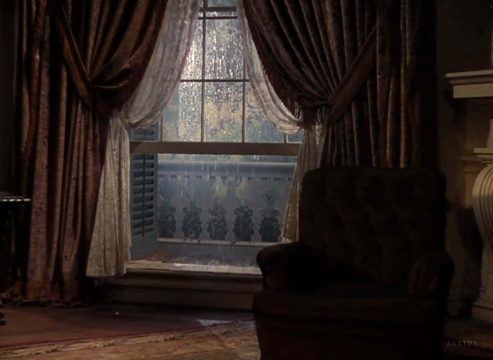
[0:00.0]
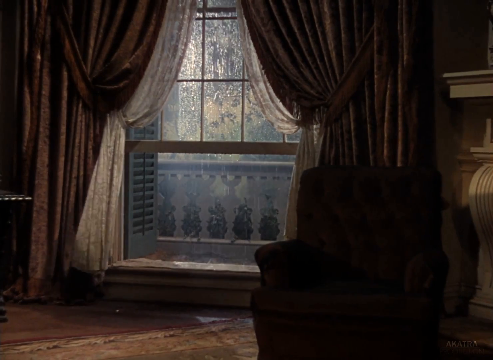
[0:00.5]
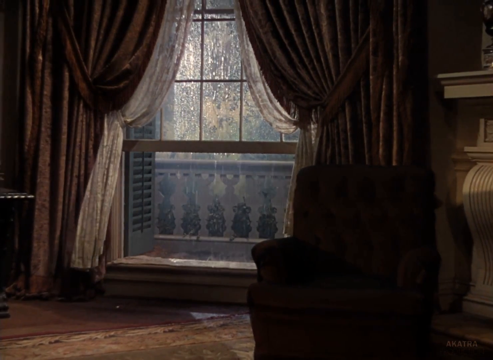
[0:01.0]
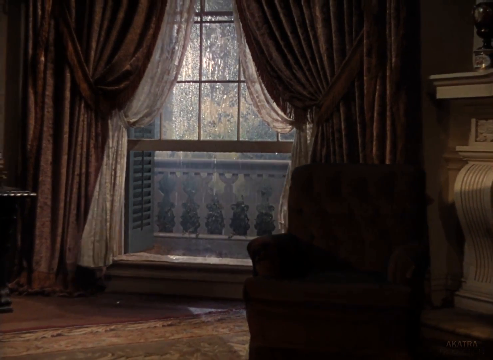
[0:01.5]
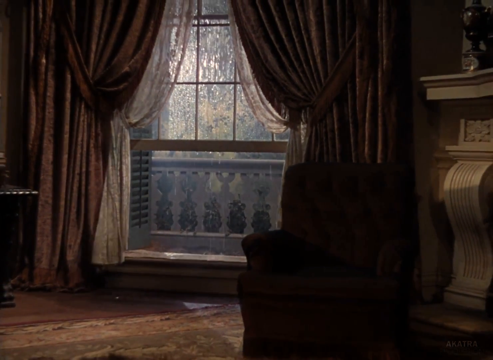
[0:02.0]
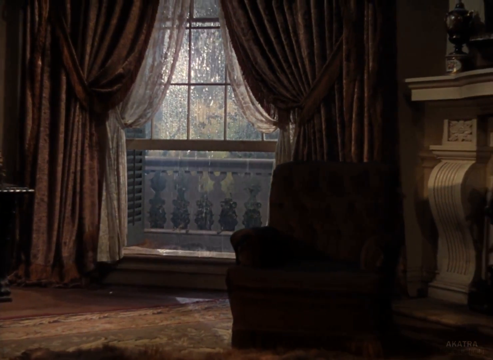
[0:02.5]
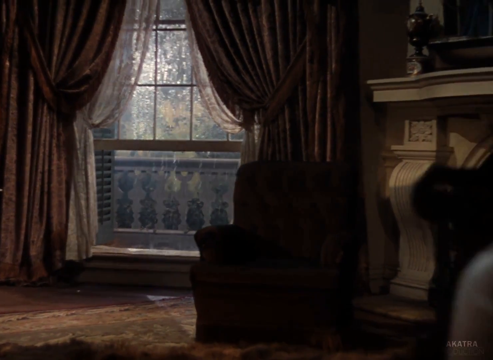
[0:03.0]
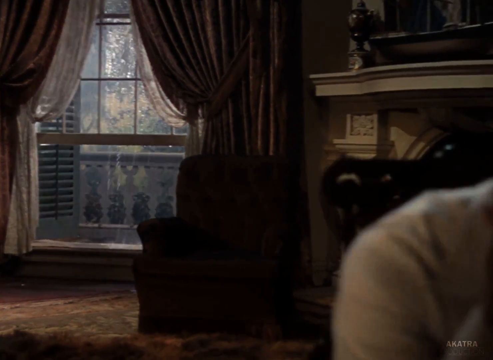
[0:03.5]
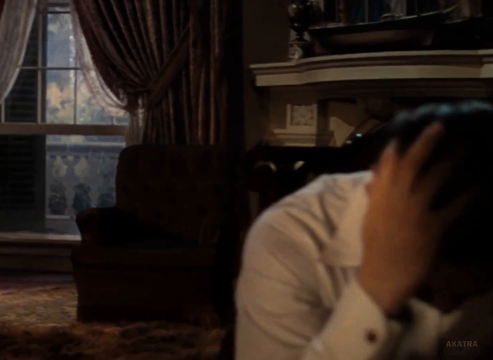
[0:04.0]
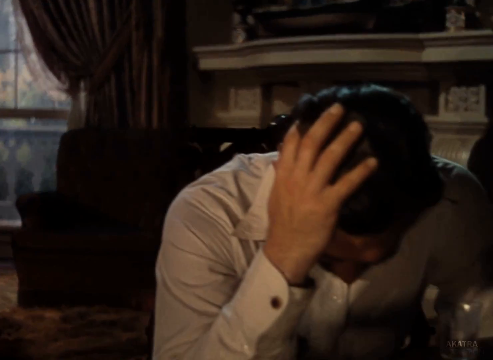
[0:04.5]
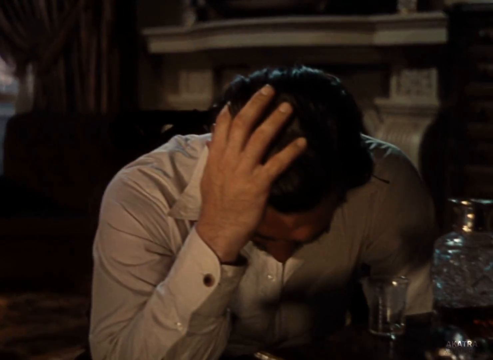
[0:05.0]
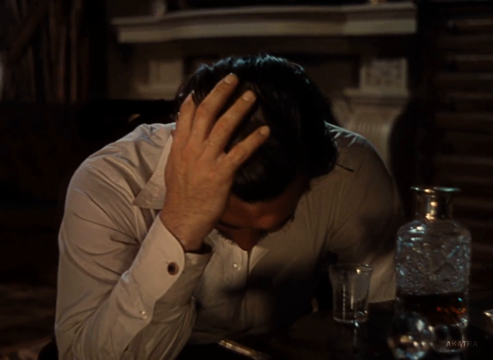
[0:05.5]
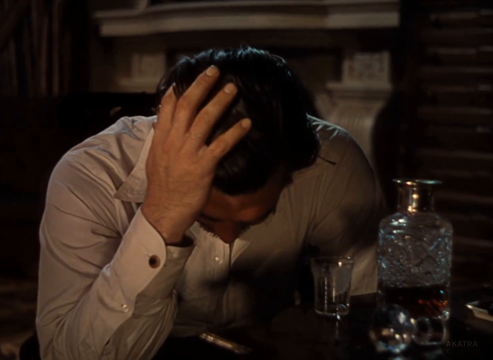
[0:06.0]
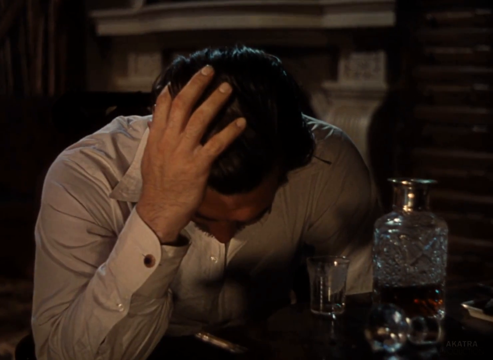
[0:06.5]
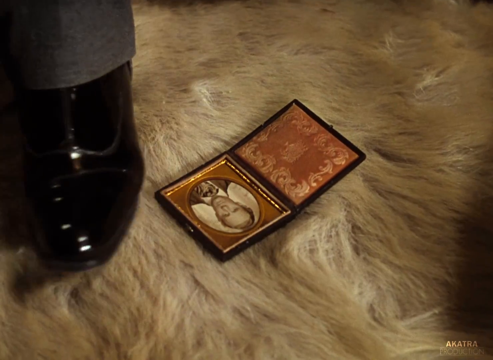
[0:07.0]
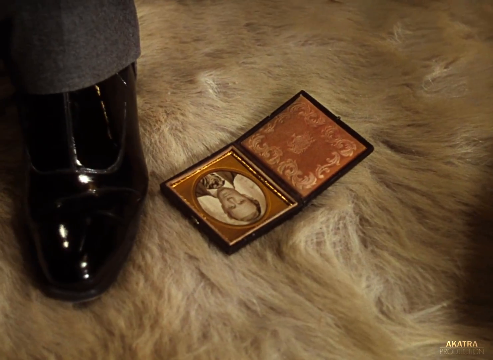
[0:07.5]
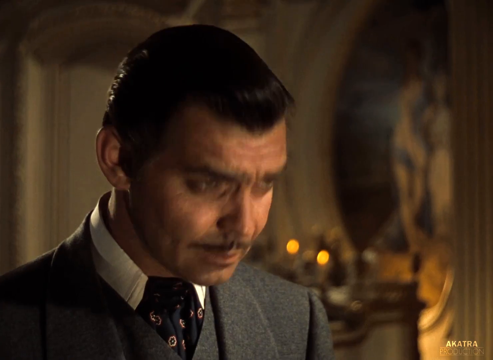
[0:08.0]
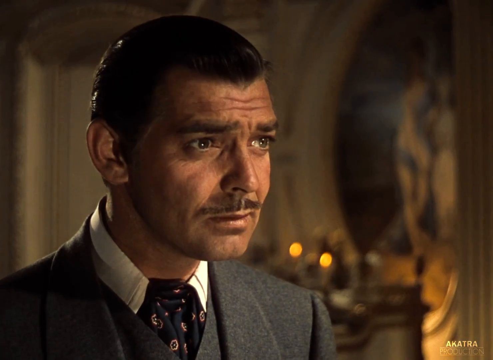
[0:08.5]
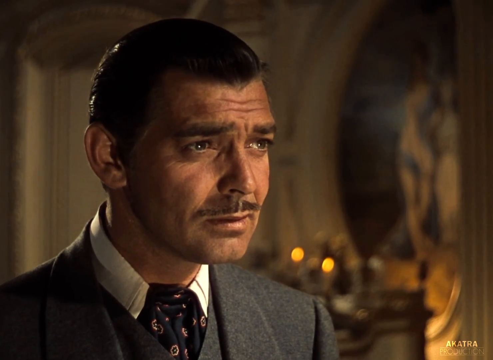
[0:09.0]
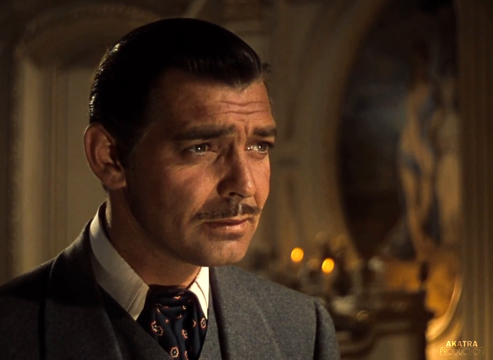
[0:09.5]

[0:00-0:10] A curtain blows in the wind while heavy rain hits the window behind it and drips down the glass. A close-up shows a man with his right hand on his face, as if frustrated or sad. Then he, or somebody, steps on a sort of locket holding a black and white picture of an old man, which suggests an old-fashioned setting.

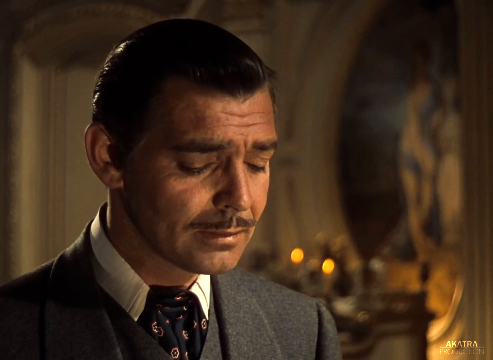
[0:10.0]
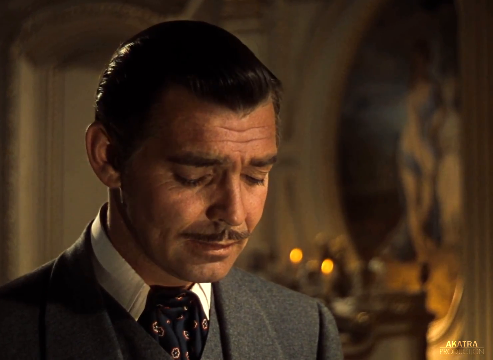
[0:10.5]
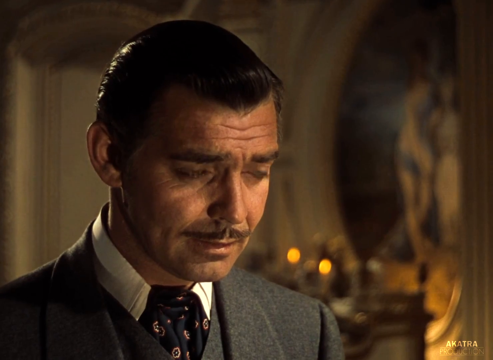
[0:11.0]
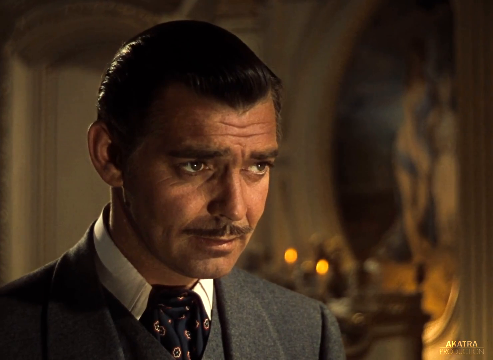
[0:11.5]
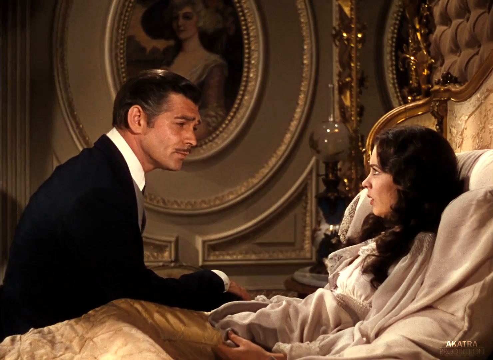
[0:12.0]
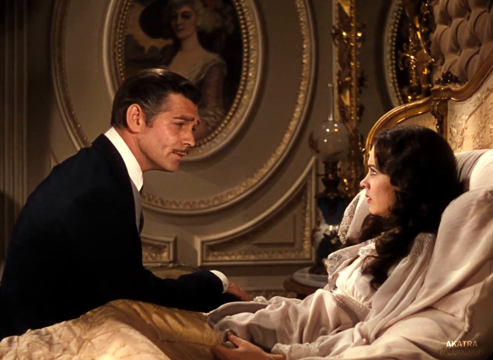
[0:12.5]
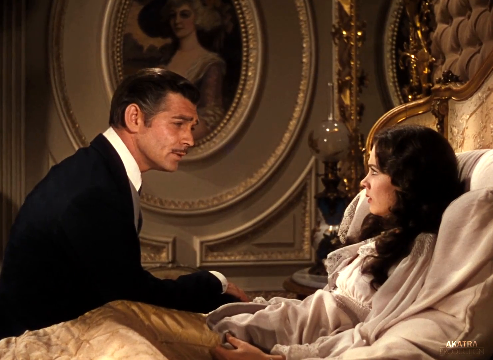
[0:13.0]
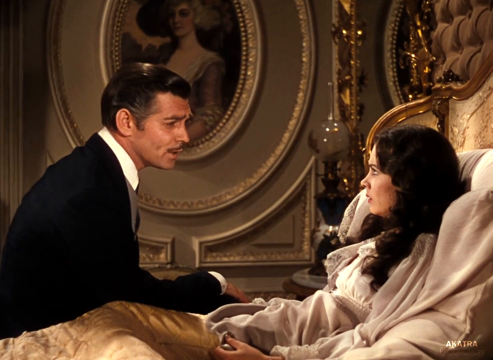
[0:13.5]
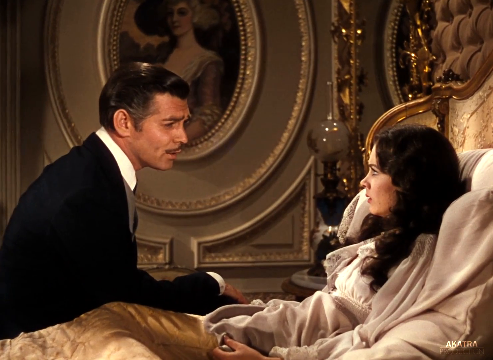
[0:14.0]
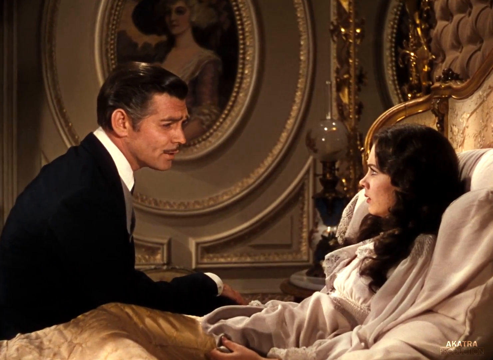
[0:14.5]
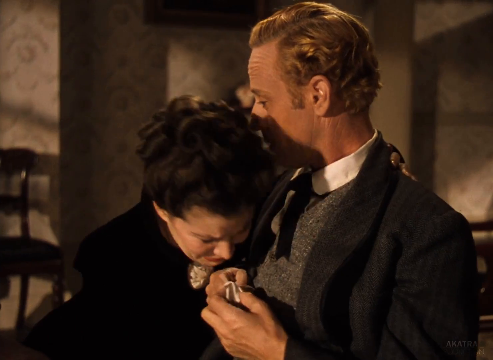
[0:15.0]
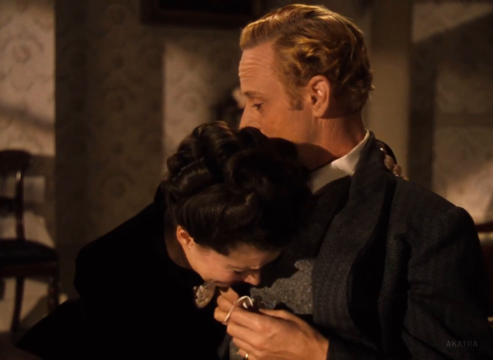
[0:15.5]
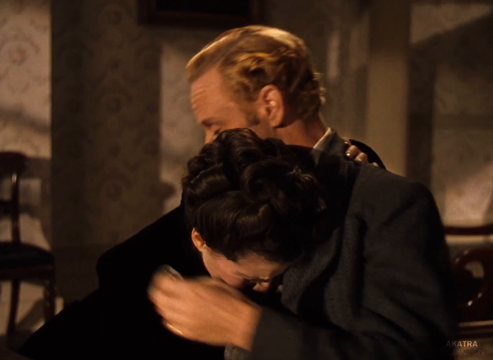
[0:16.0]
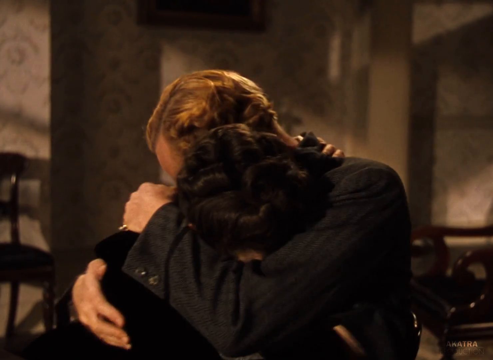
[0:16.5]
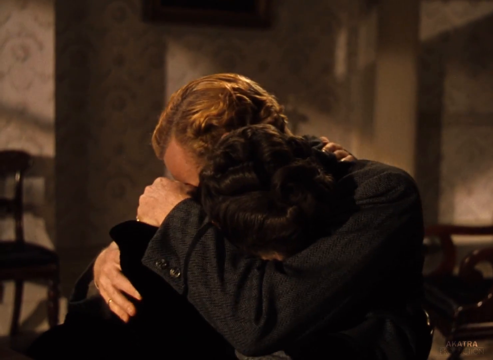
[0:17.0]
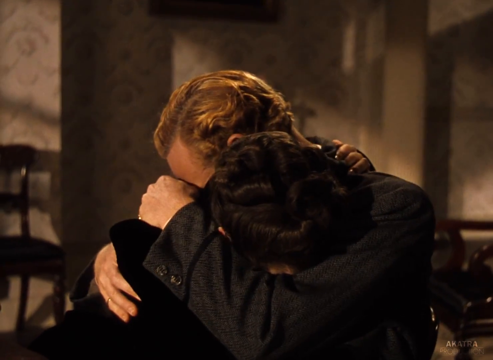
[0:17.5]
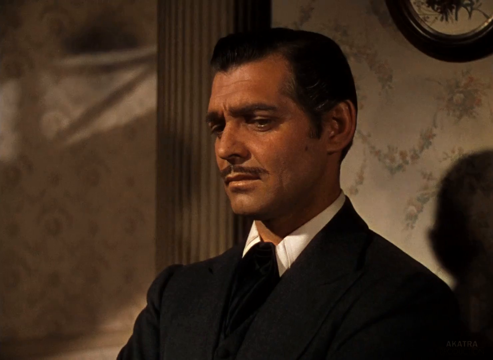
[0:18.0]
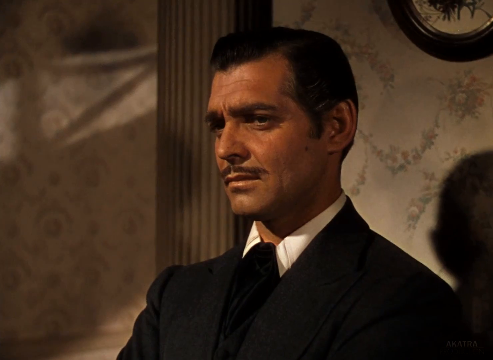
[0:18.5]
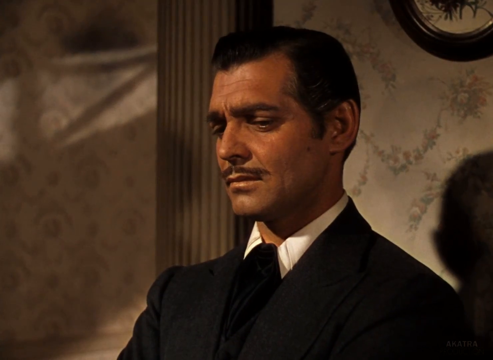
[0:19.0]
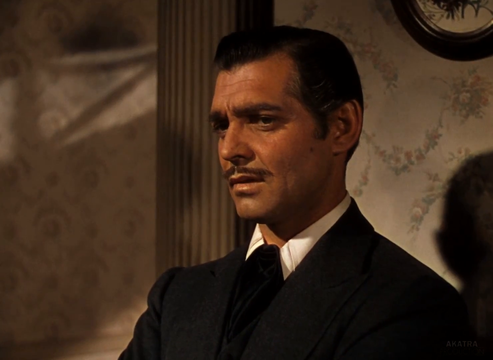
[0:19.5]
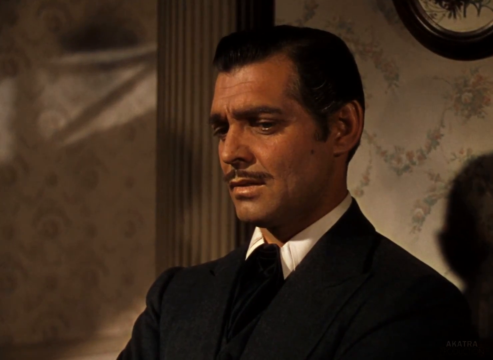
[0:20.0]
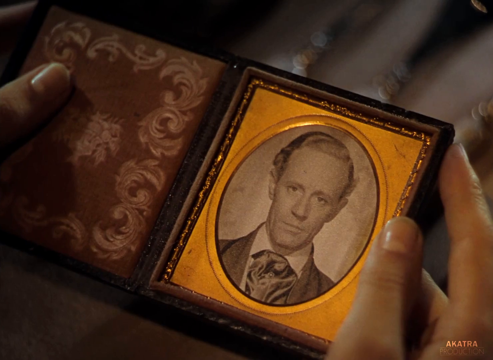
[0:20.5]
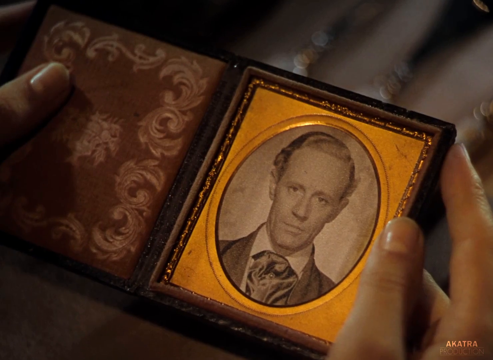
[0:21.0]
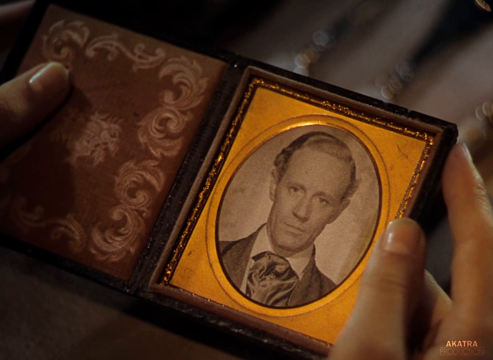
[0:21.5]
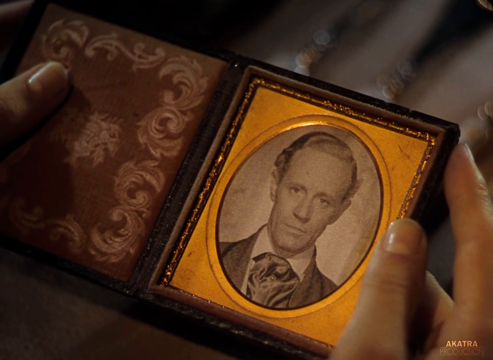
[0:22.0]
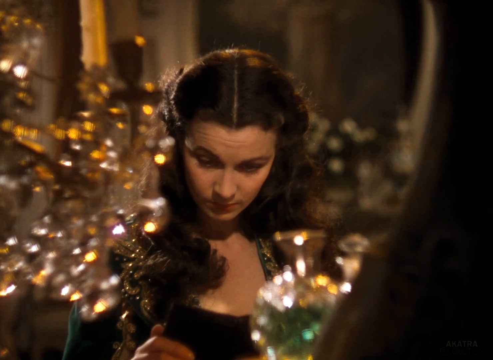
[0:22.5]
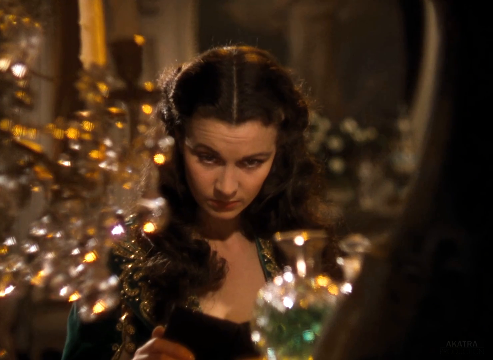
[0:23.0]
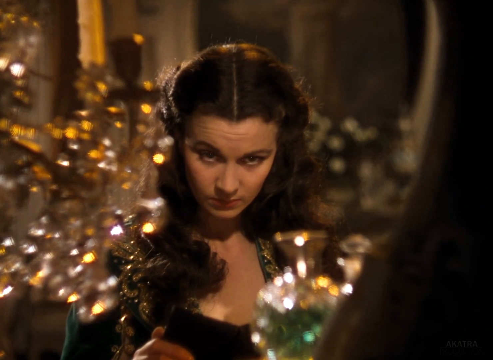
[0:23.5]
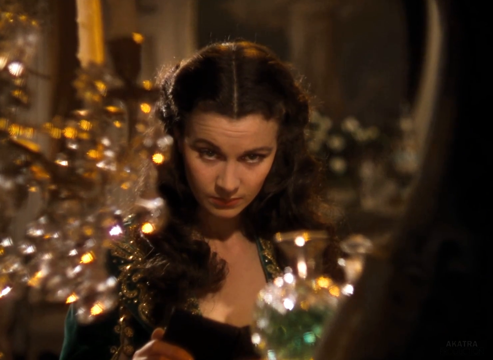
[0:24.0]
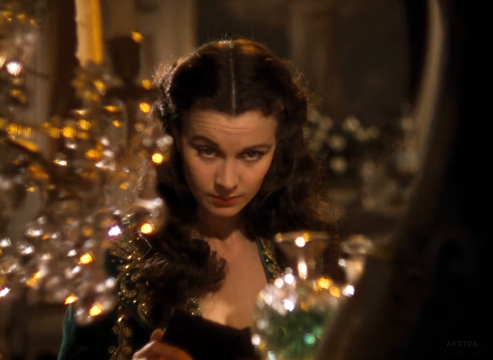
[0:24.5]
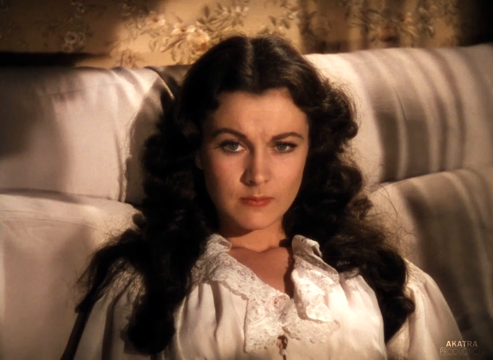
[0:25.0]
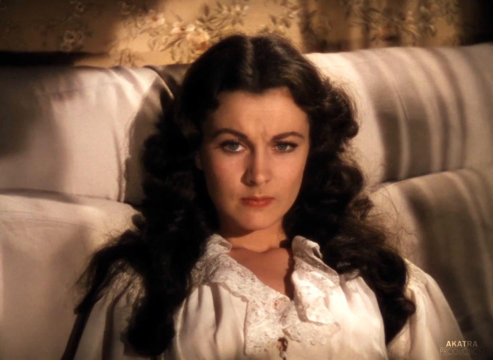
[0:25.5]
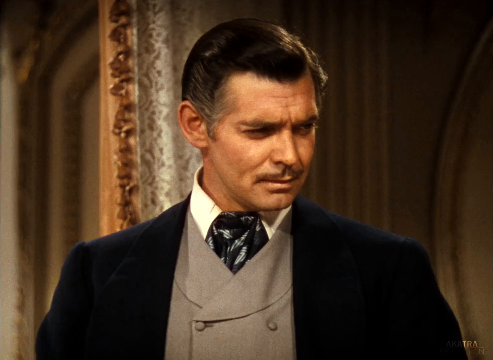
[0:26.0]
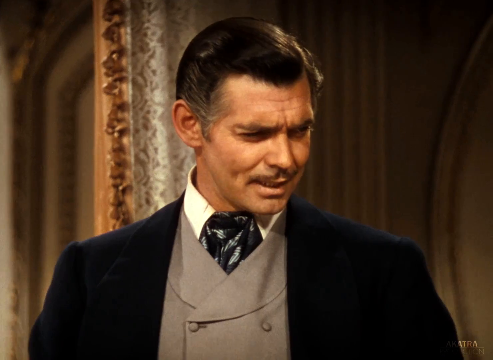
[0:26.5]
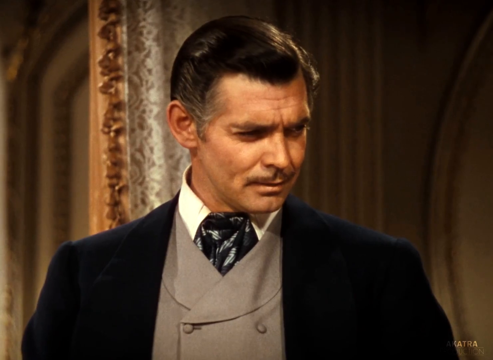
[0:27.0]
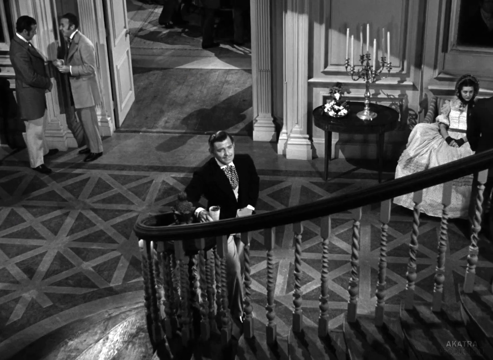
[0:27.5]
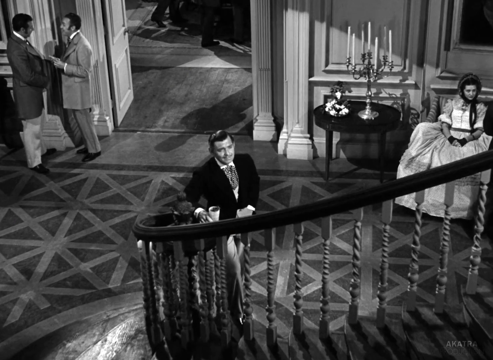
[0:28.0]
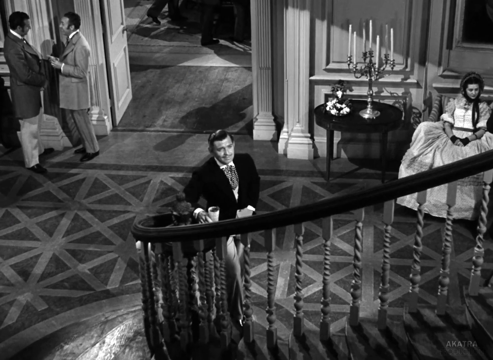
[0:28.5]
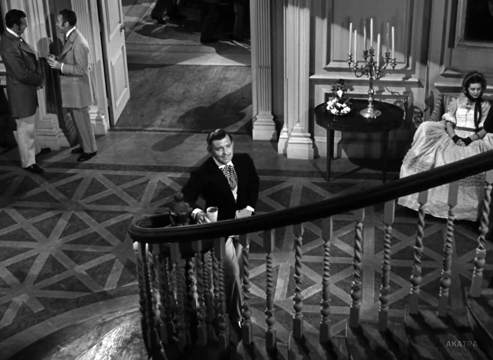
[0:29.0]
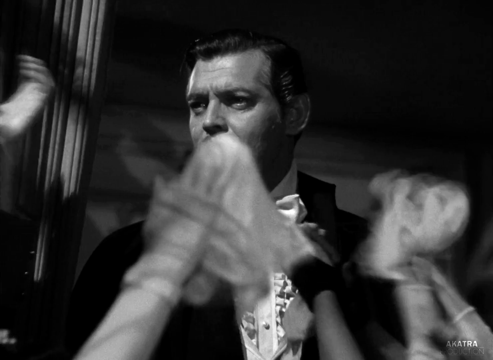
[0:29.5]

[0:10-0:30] The man is talking to a lady in bed. He wears a sort of black vest with a black tie, and he has sat down on the bed with his right arm kind of leaning on her as he leans toward her and talks. The scene cuts to a pair in which the lady hugs the man very closely; she is crying and looks worried. She has kind of curly, dark brown hair, and he has slicked blonde hair. Next, the man from the opening appears again, holding the old locket. More shots follow of the lady from the bed, including her looking in a mirror.